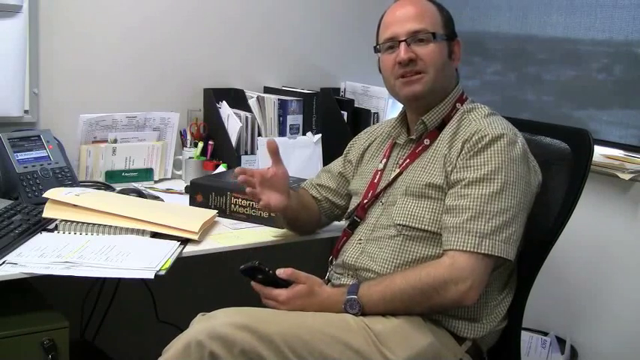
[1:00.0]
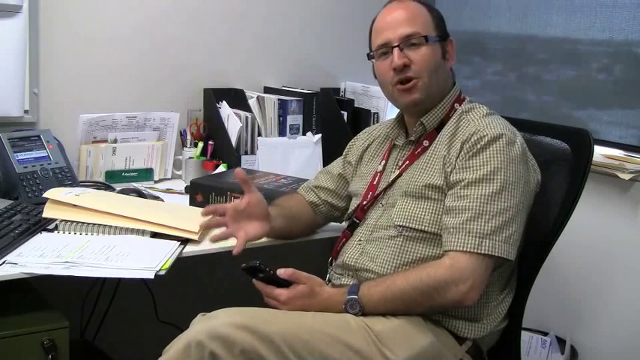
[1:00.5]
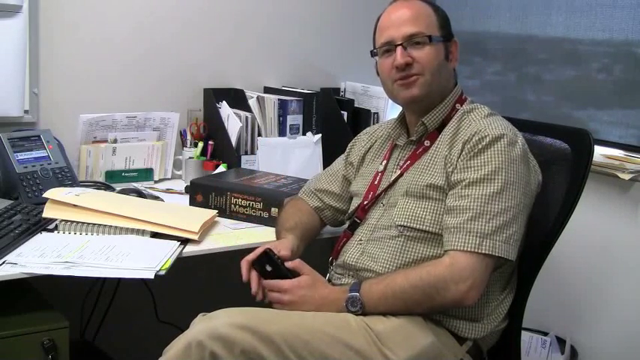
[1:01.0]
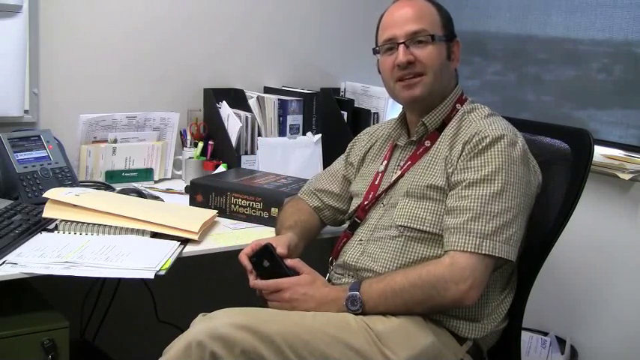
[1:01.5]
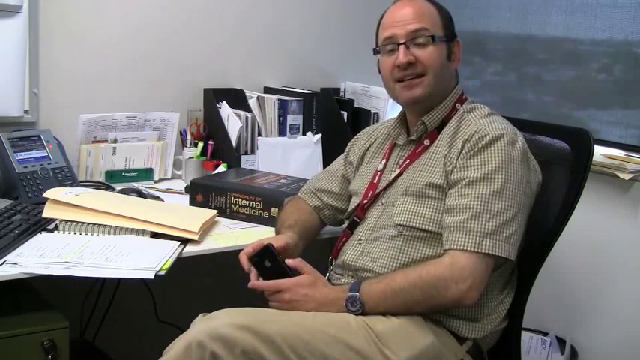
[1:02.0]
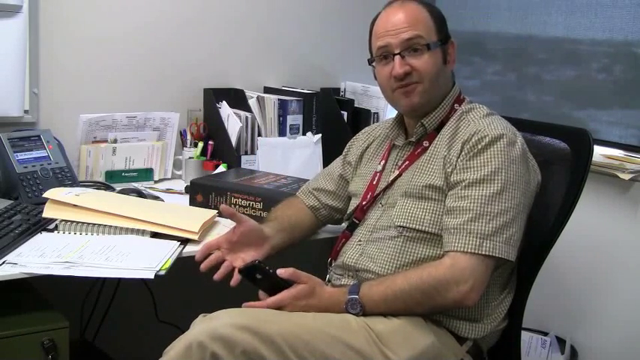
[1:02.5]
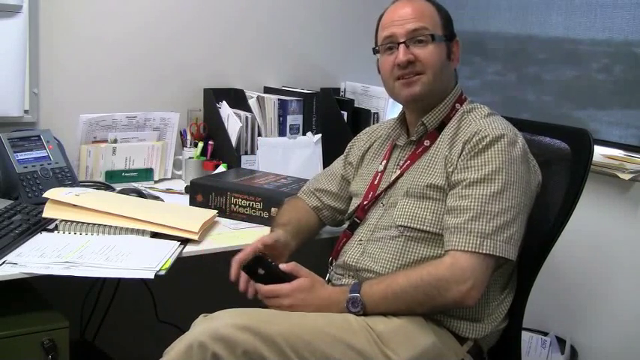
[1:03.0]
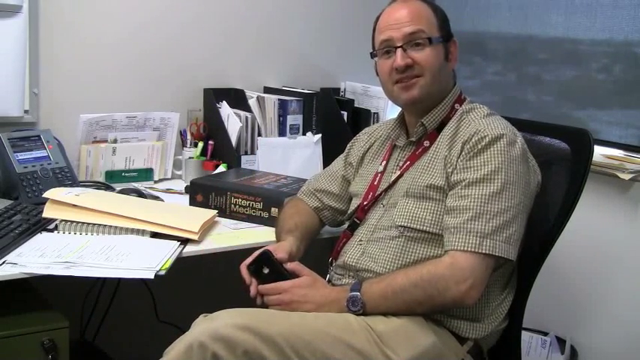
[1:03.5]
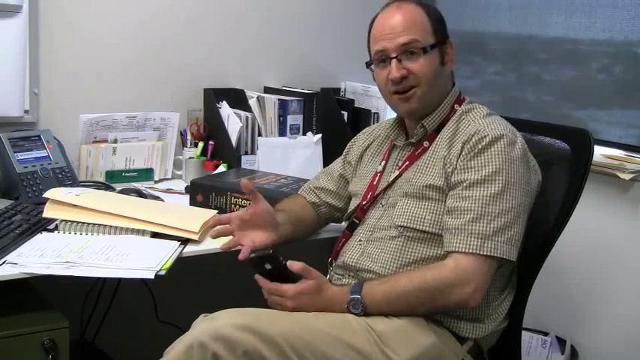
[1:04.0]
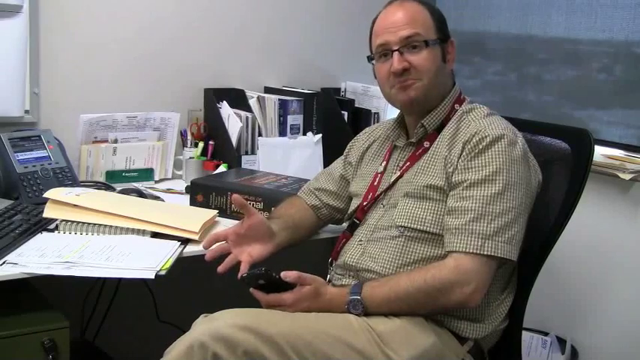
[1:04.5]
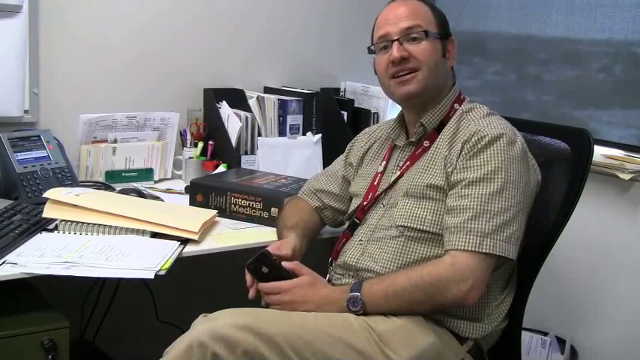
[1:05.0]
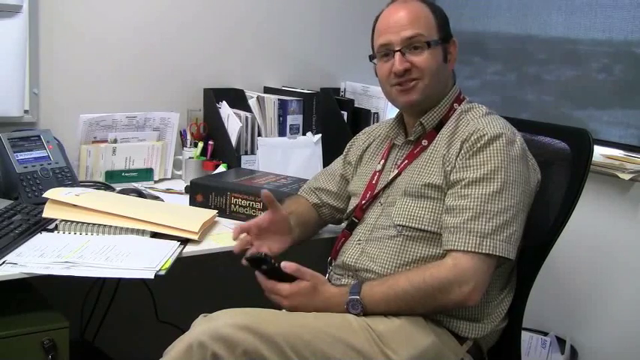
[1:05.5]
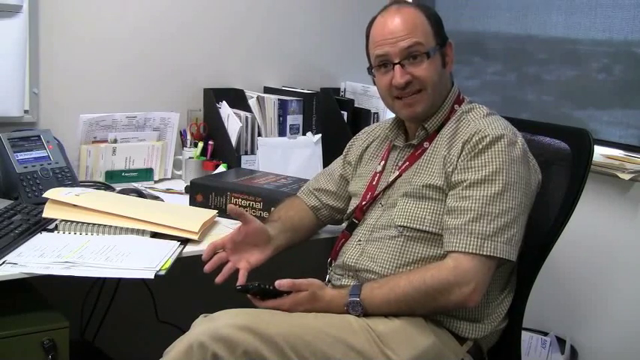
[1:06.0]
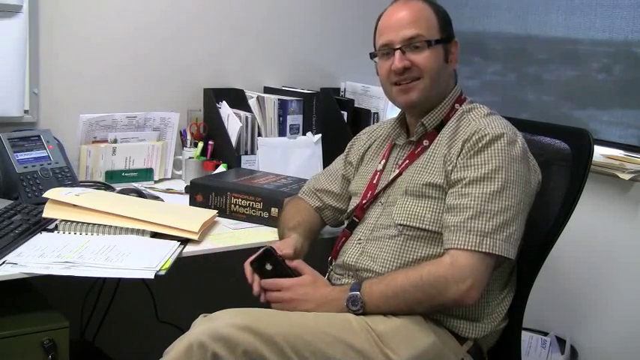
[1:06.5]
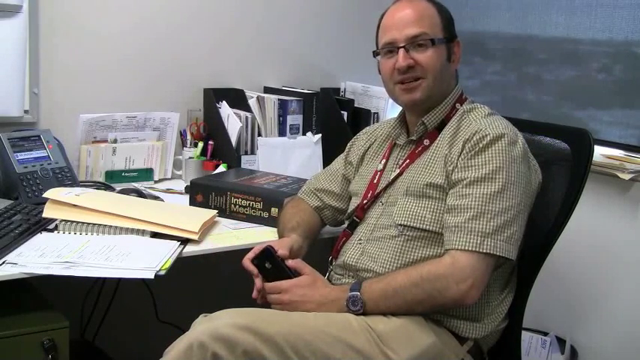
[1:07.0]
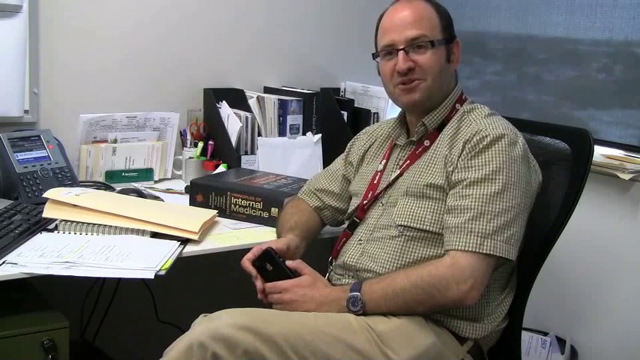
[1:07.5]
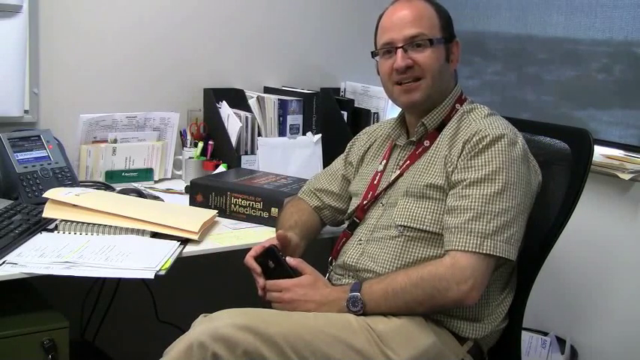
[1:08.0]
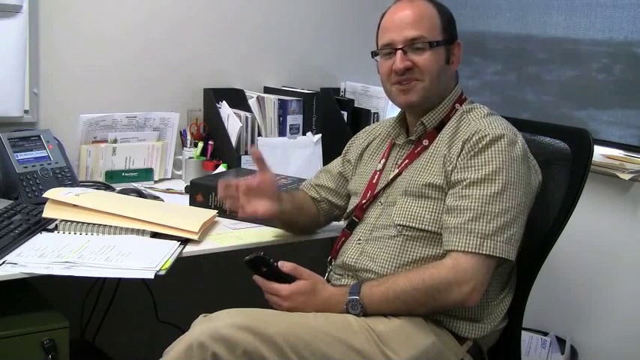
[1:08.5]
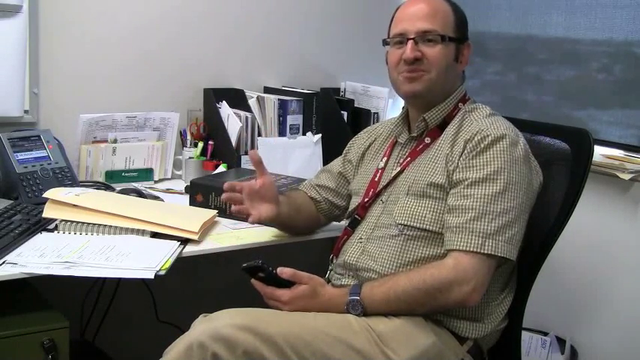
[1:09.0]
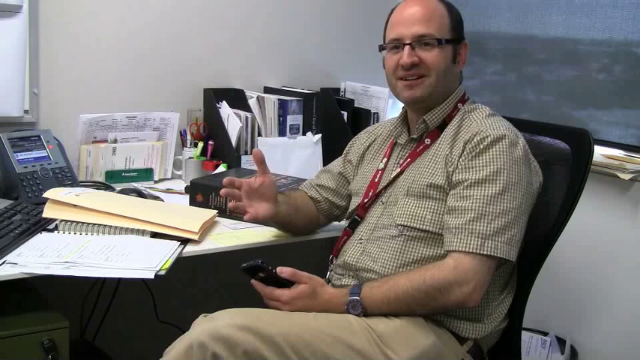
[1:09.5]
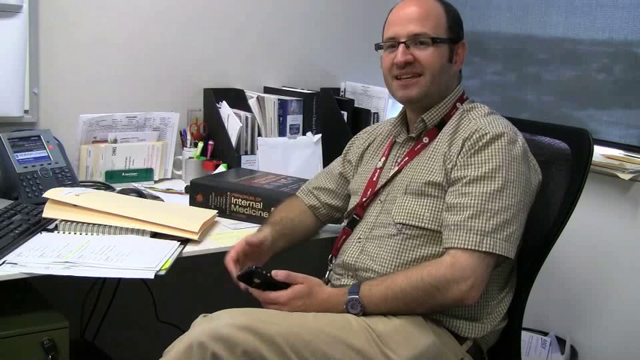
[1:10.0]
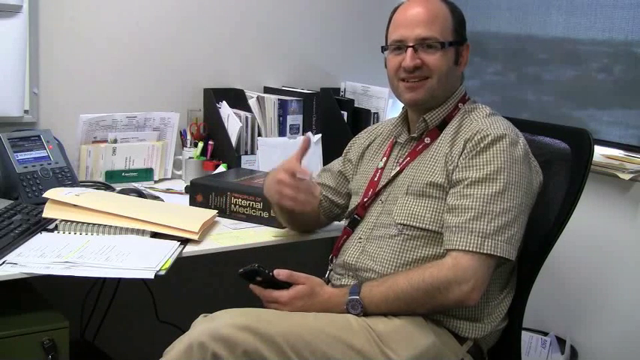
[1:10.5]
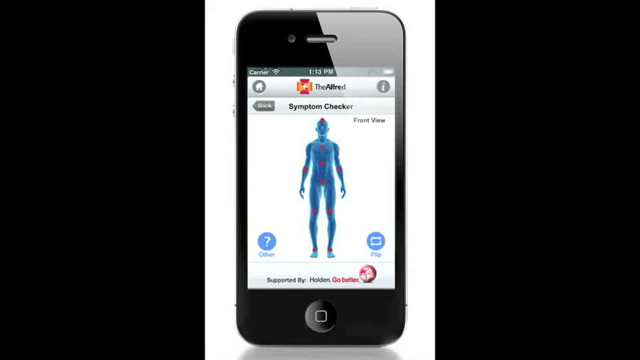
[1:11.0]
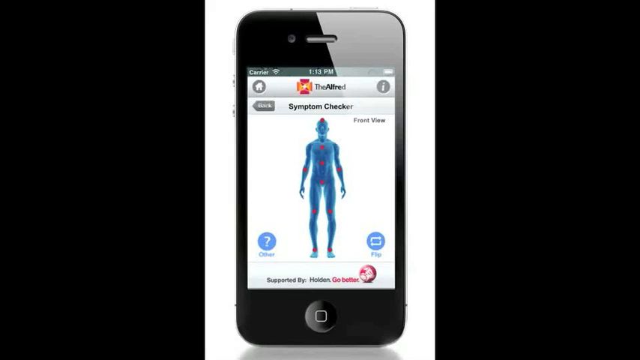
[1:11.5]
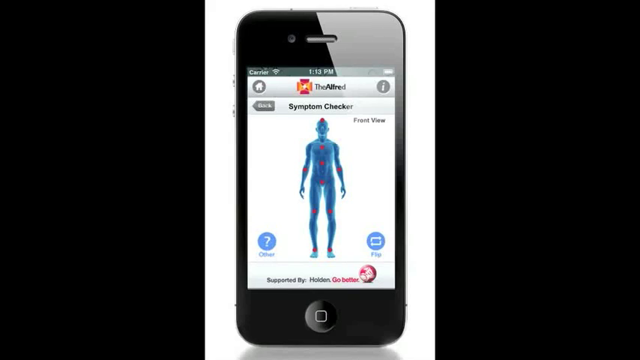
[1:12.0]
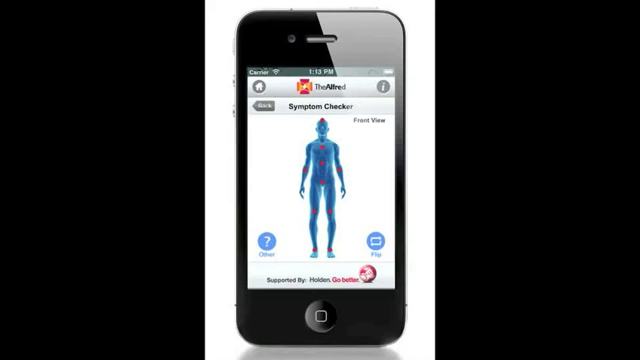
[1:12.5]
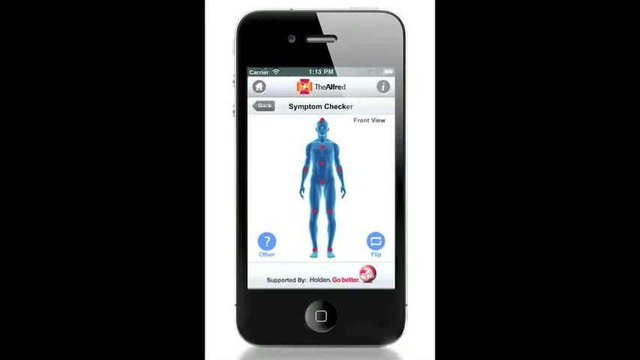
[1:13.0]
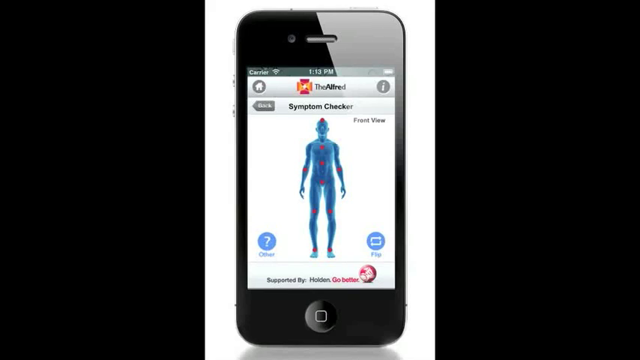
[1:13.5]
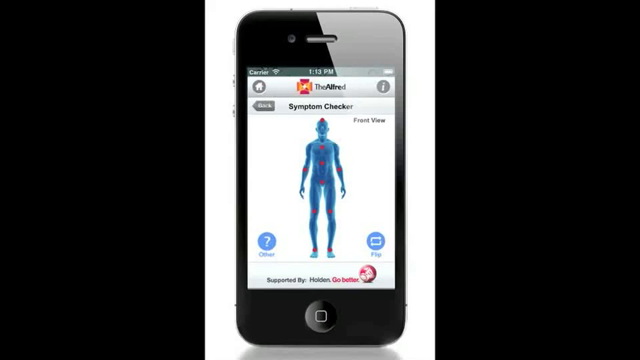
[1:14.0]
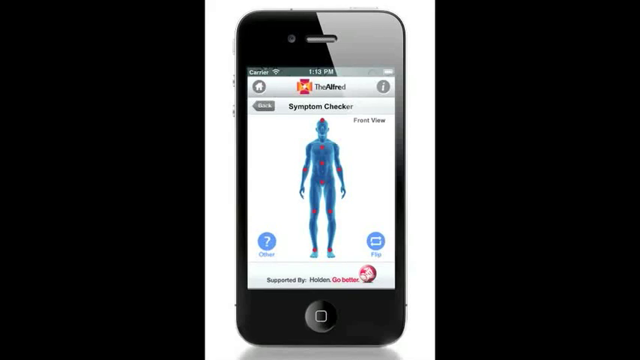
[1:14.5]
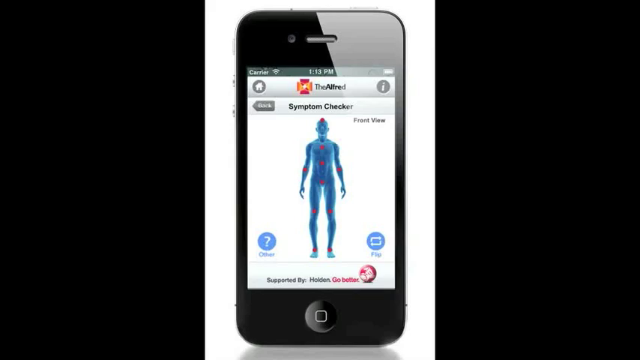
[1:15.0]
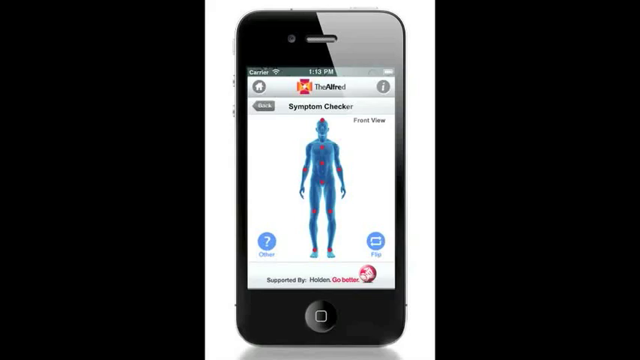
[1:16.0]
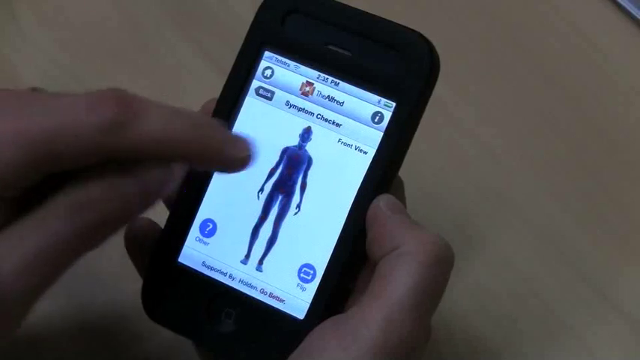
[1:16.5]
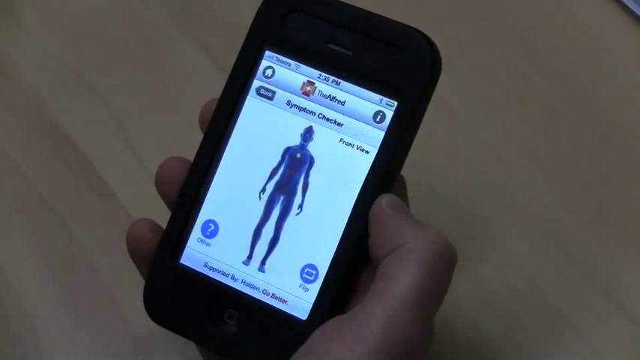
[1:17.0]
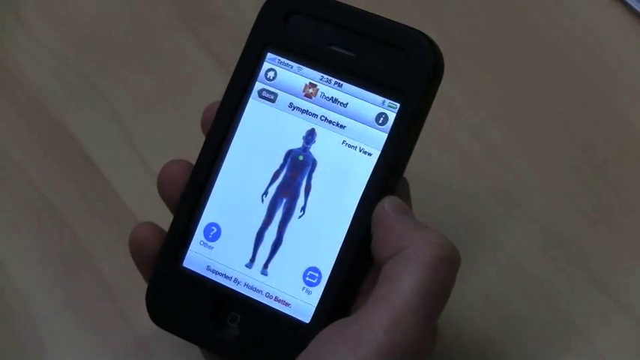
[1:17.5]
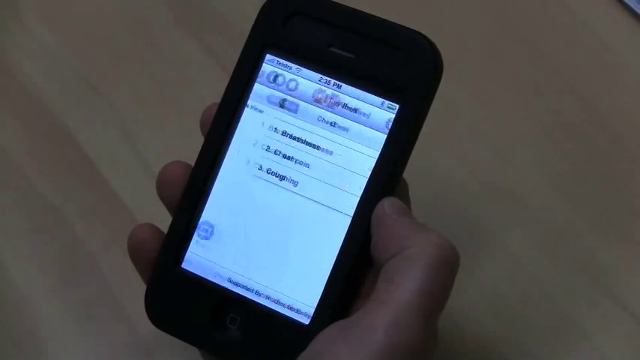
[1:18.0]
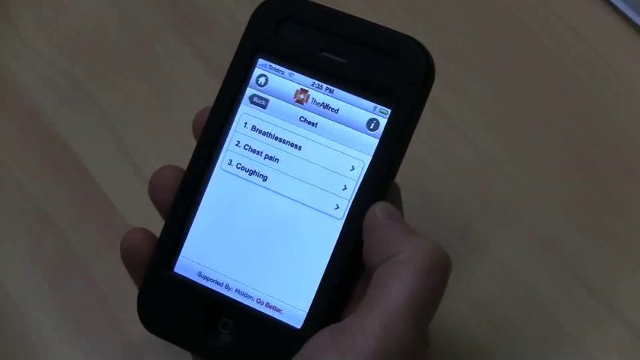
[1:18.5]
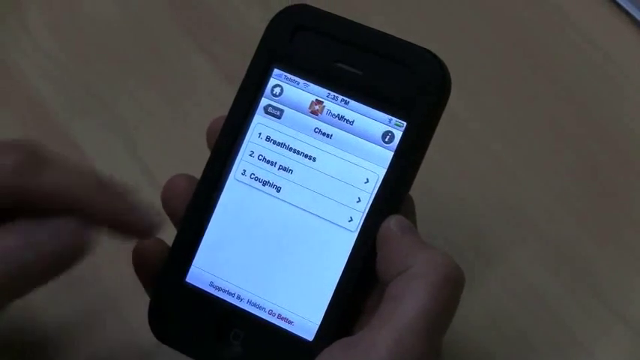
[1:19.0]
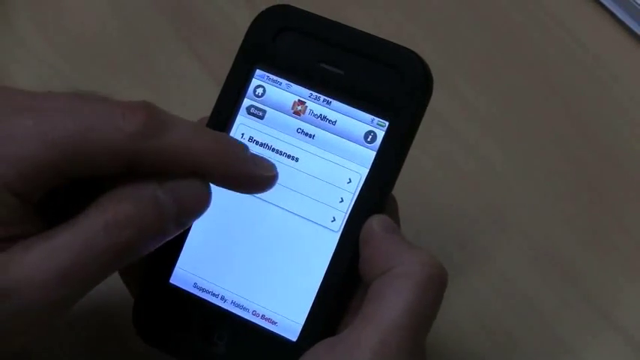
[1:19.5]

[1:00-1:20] In the office-like area, the man sits in his chair looking at someone off camera. He has a white skin tone, is balding, is older, in his 30s or 40s, and wears black-framed glasses, a green and white checkered shirt and a red lanyard around his neck. He has a watch on his left wrist and holds a black iPhone in his left hand. His chair is black. To his left is a desk with a telephone on the far left next to a black keyboard; further right are some notebook papers, a large black book of internal medicine, and binders and books to the right of that. He sort of waves his right hand slightly before gripping the other end of his iPhone with both hands, then repeatedly opens his palm and lifts his right hand in slight gestures. The scene changes to an image of a mobile phone showing the Alfred website. At the top middle, black text reads "the symptom checker", and to its left is a back button, a white sort of left arrow on gray. Beneath it is a sort of blue model of a human with several small red circles on the head, chest, belly, crotch, knees, feet and arms.